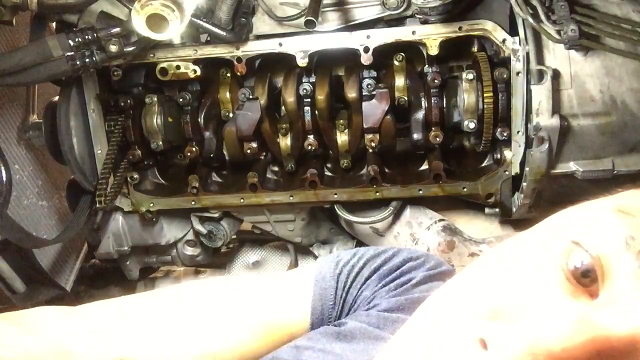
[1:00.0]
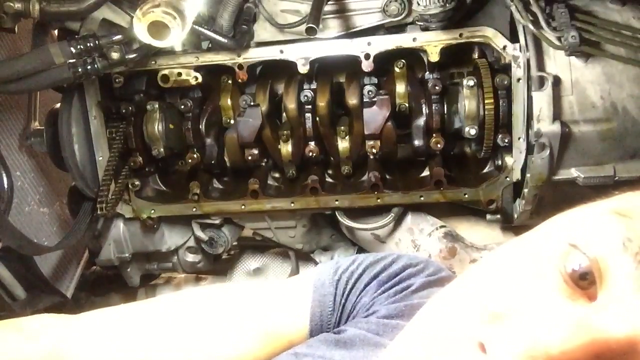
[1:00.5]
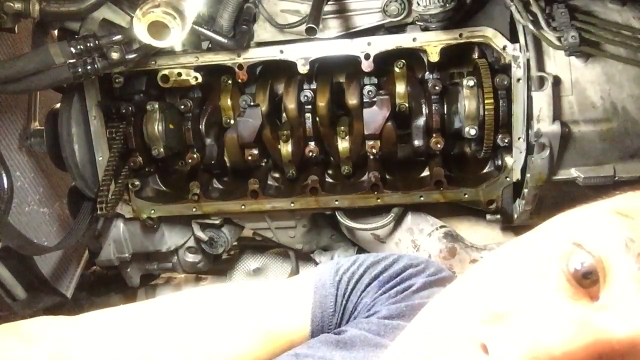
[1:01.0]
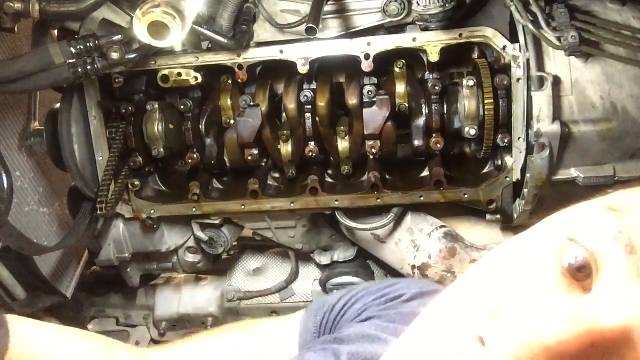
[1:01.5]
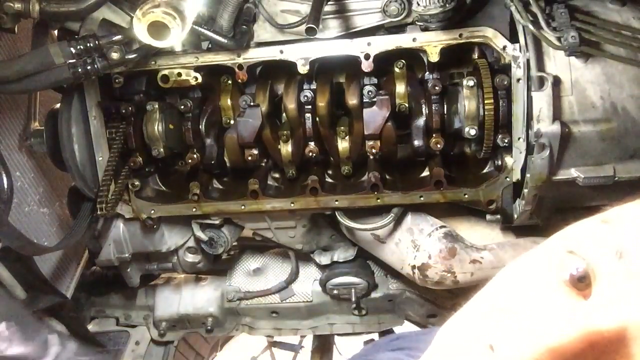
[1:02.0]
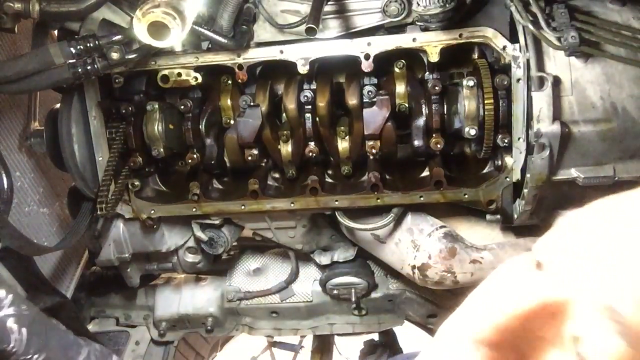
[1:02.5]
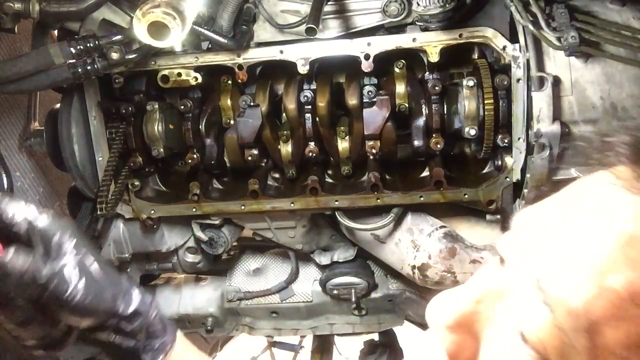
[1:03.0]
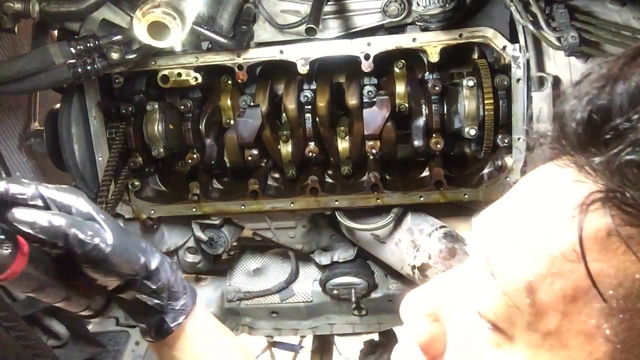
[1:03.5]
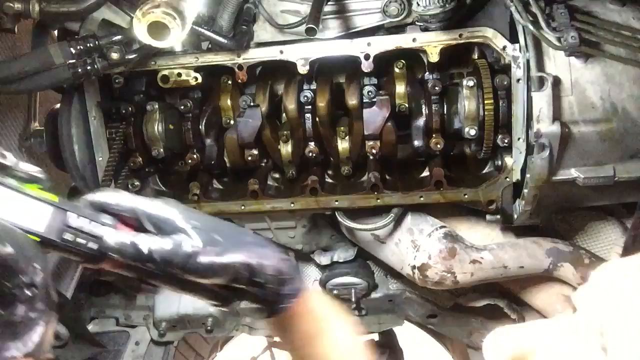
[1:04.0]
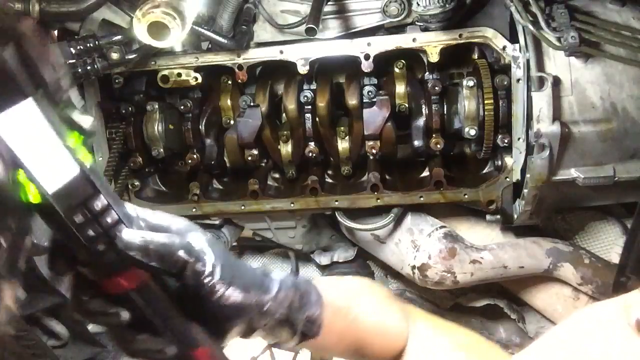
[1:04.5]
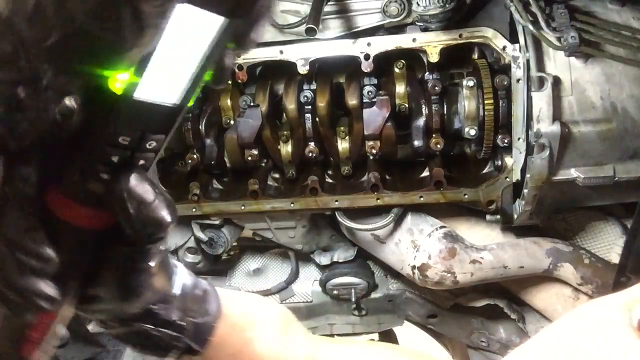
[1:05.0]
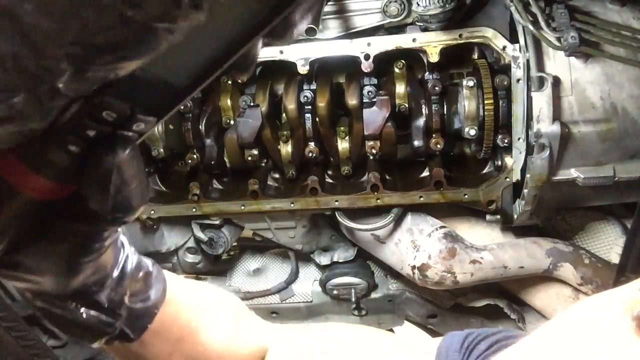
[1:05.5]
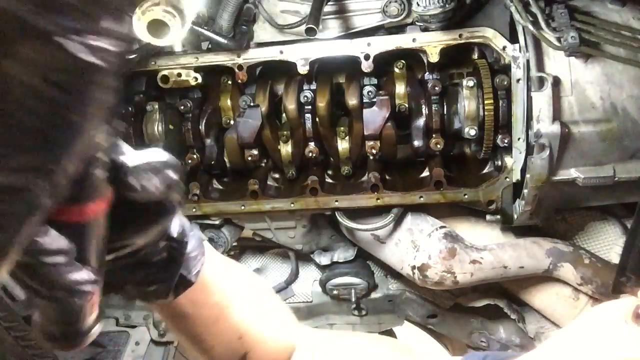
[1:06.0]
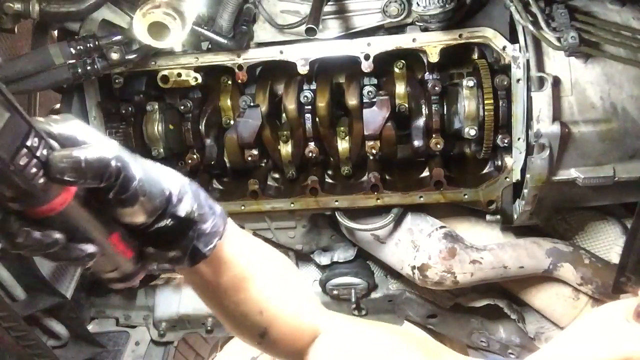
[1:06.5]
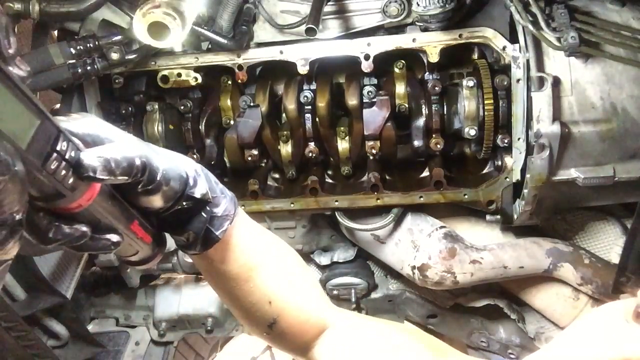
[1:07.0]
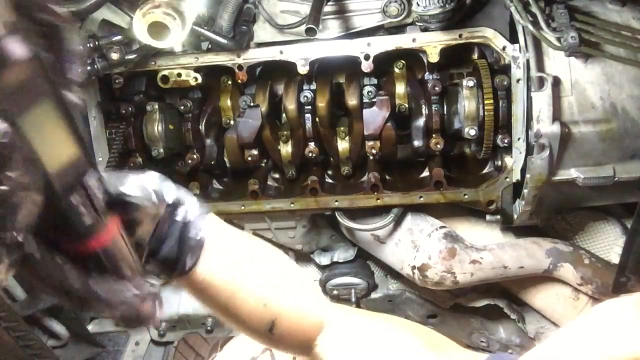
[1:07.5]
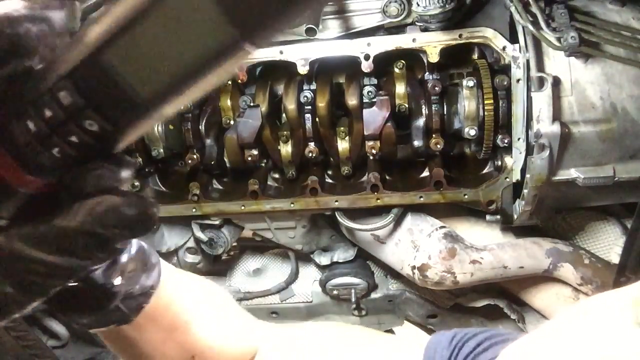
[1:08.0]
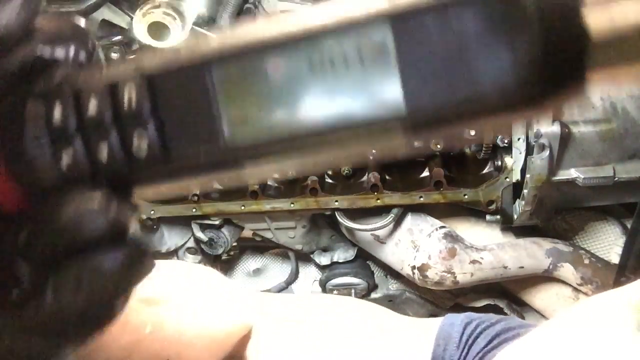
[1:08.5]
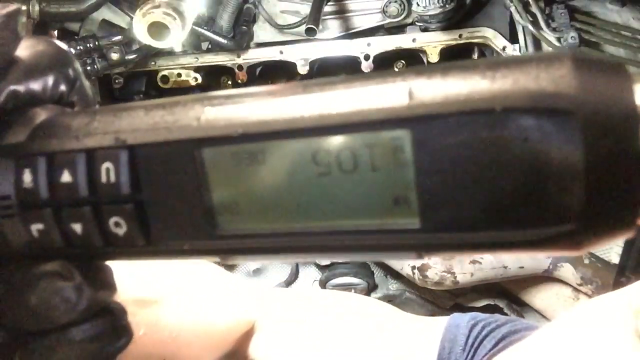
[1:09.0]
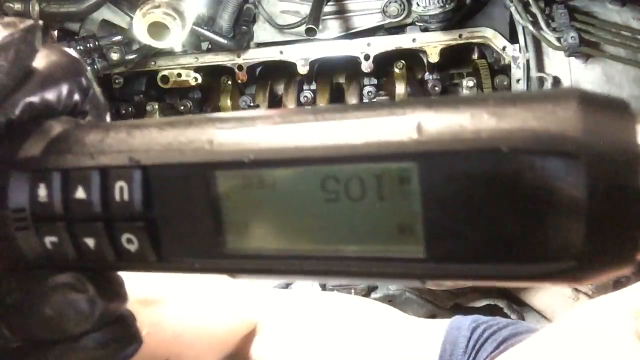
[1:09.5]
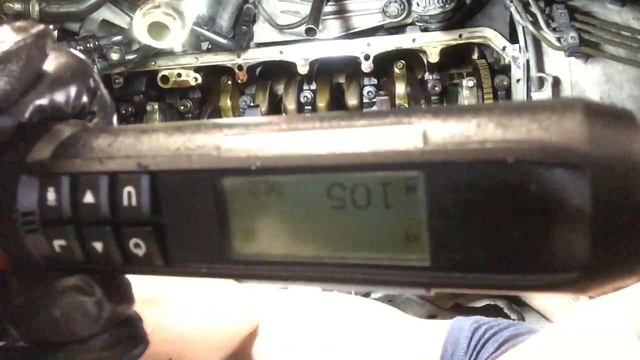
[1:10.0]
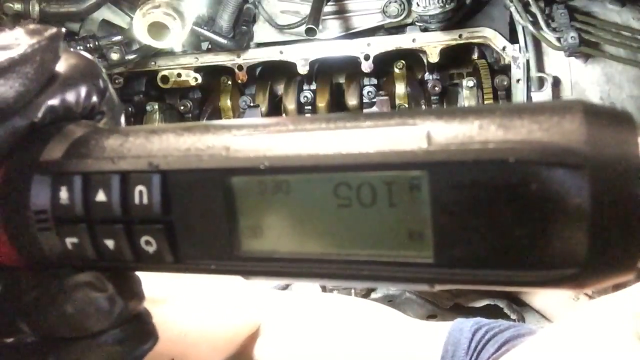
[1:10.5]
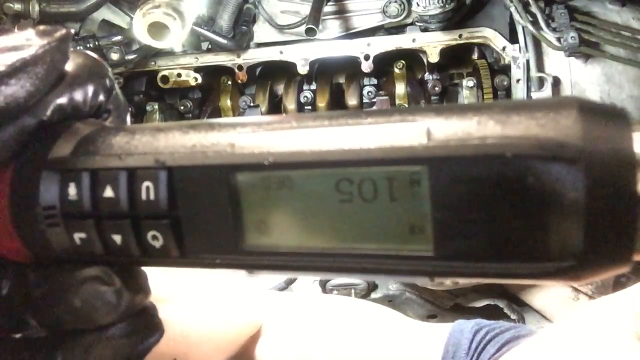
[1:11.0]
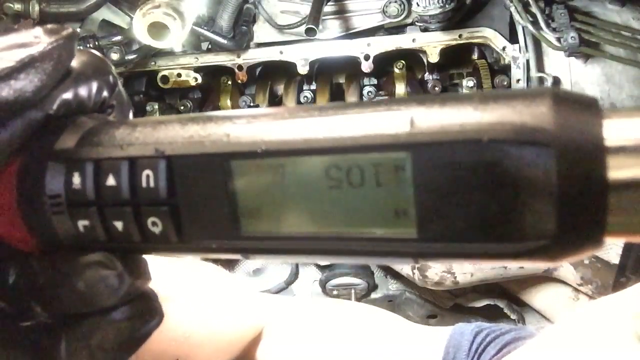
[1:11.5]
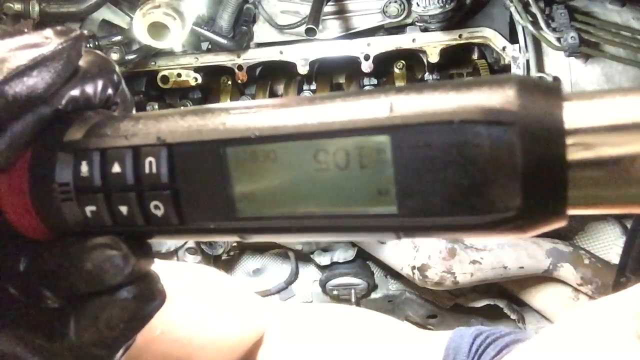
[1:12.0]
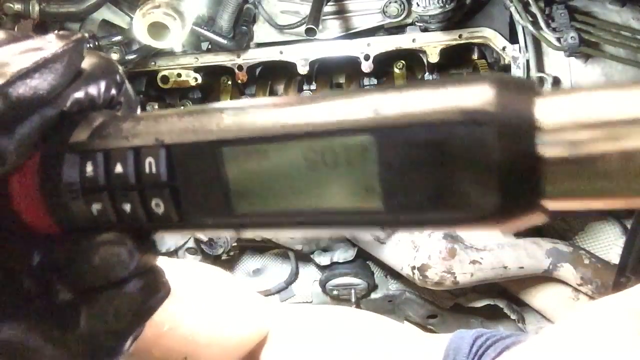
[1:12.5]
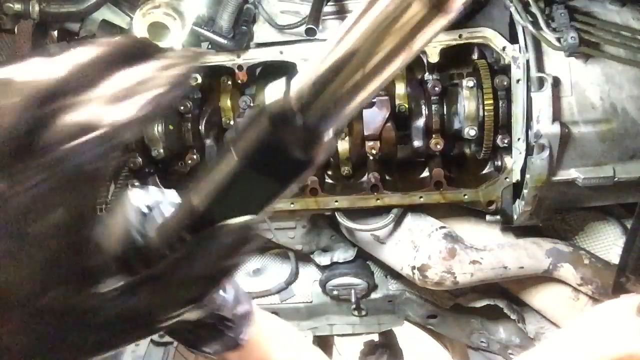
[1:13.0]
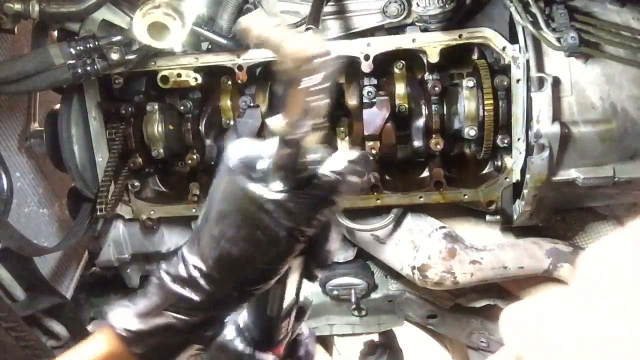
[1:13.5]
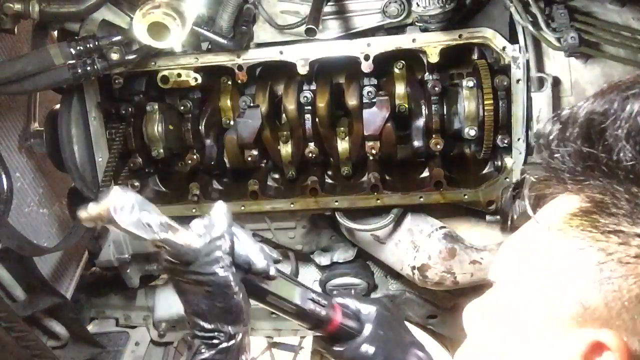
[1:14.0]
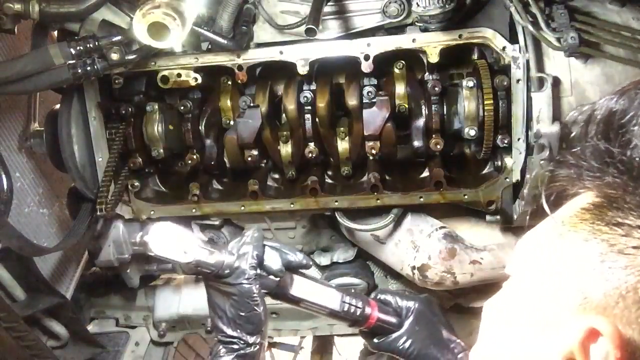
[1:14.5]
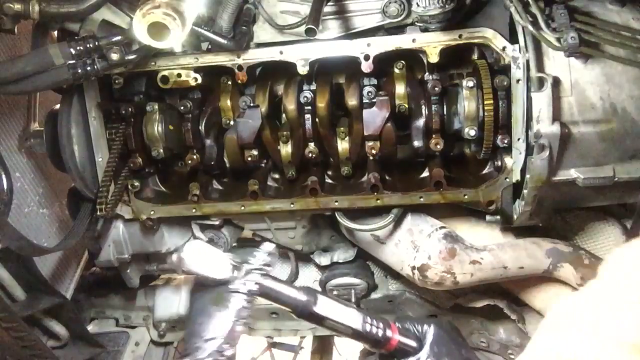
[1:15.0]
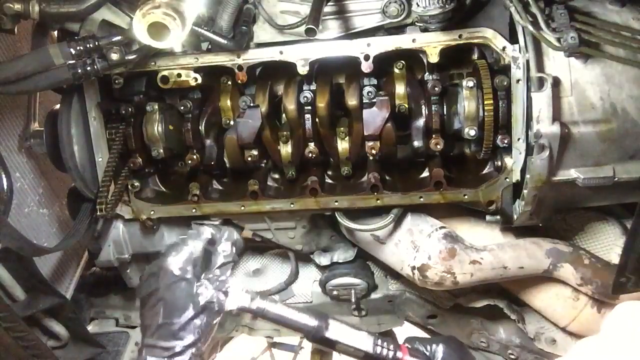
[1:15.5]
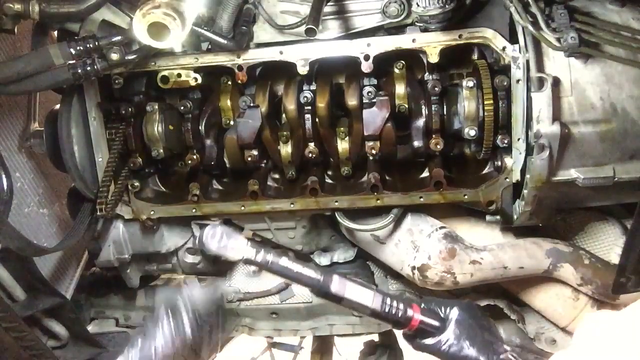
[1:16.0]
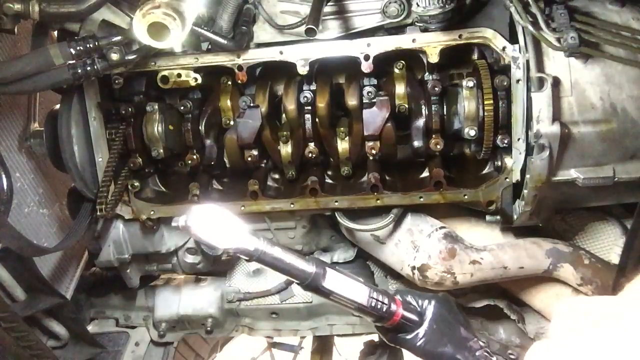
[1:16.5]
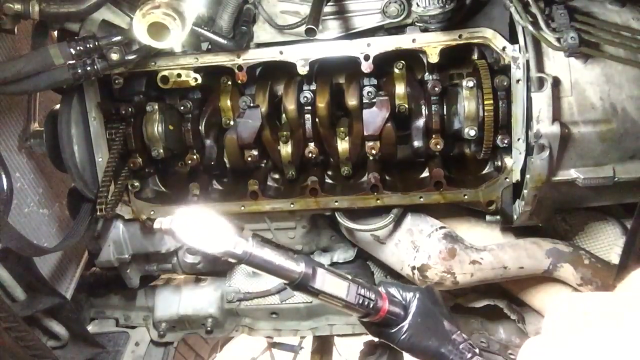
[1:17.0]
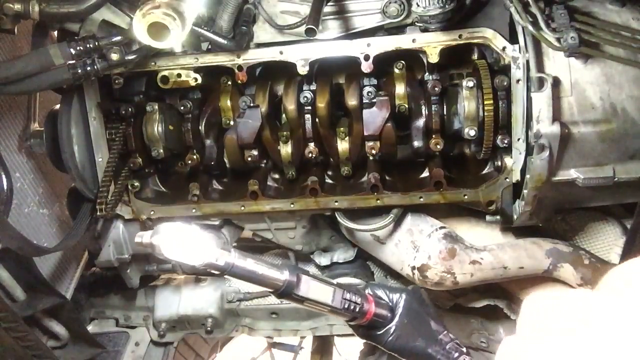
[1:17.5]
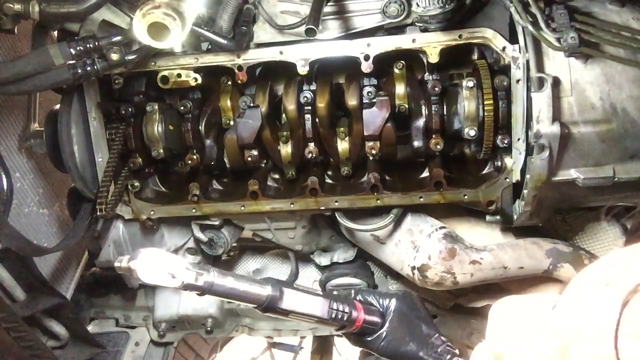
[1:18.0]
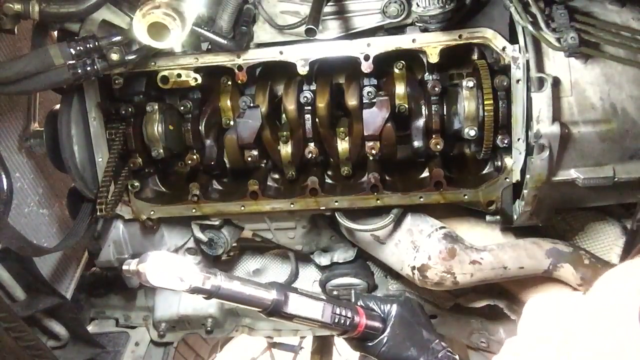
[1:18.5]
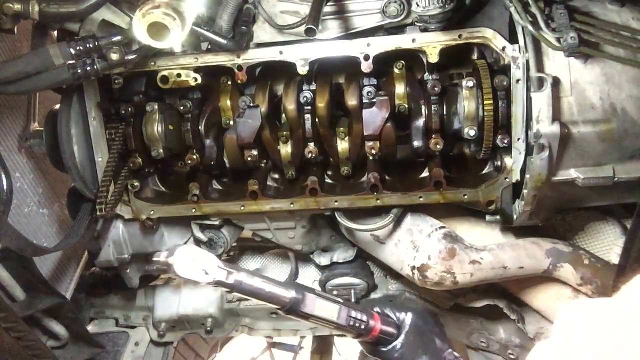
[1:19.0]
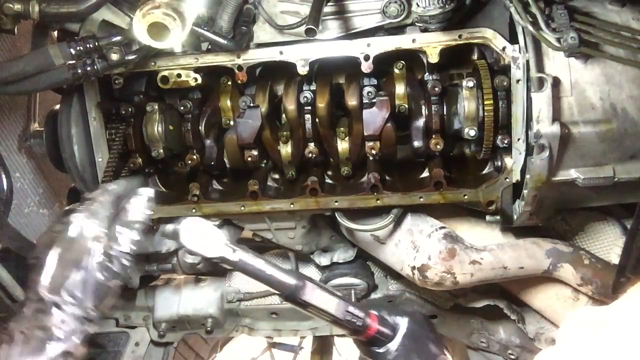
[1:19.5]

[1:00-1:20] The person adjusts the camera slightly so that it shows more of the image to the left, and they appear to have black hair. They look away from the camera, back down again, then bring the cylindrical device up to the camera, kind of showing which buttons they are pressing. The device appears to have a digital display with a green-tinted background, and the display looks like it might say 105, but it is apparently held upside down, making it very difficult to read. Green lights come on at either side of the display, top or bottom, while it is shown to the camera. The person then brings the device back down and grasps it on its left end.